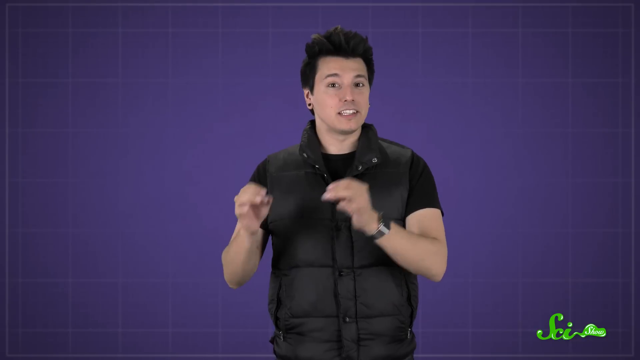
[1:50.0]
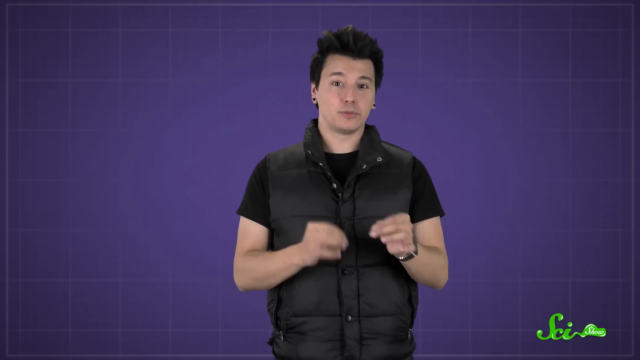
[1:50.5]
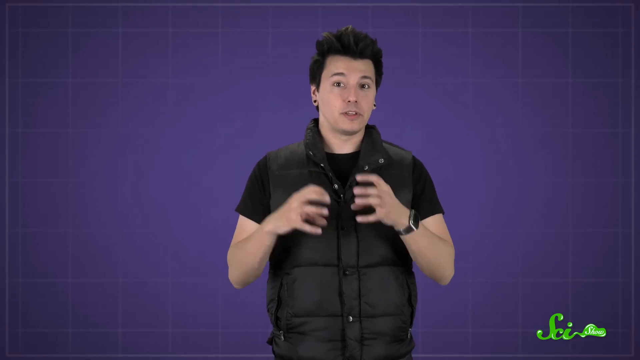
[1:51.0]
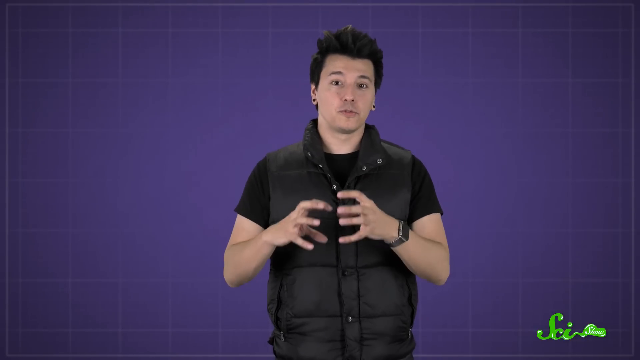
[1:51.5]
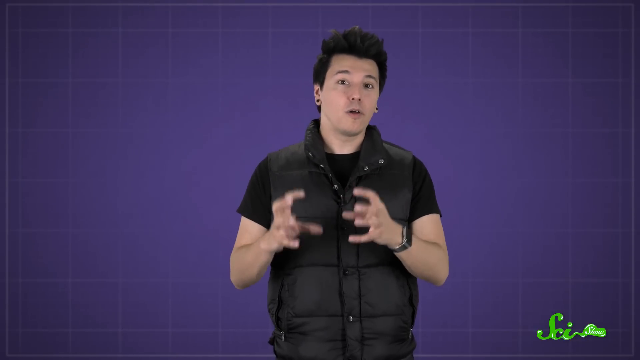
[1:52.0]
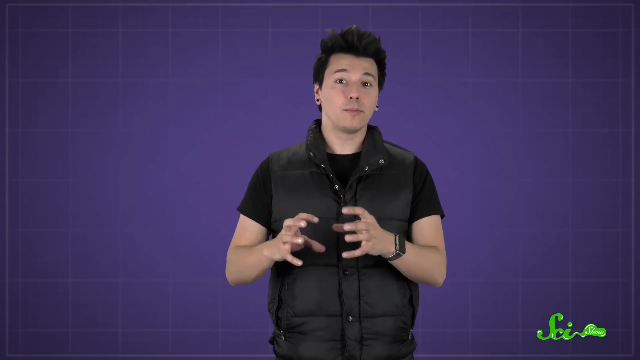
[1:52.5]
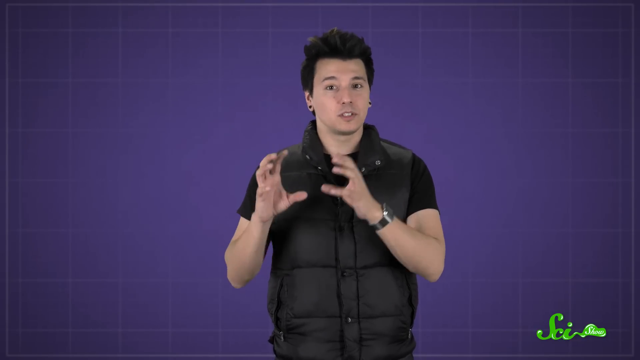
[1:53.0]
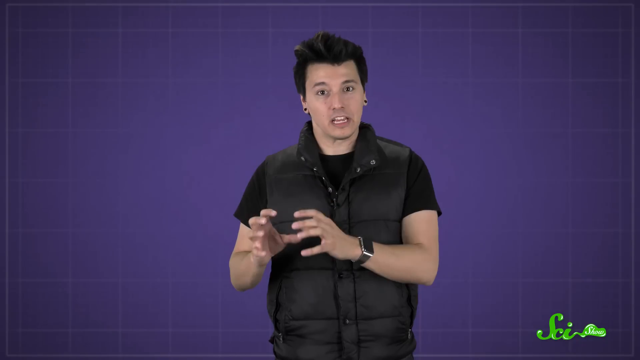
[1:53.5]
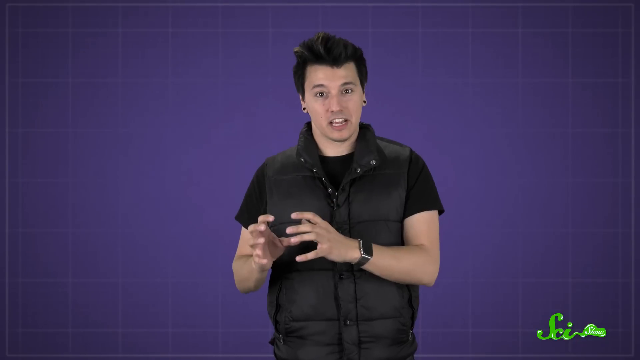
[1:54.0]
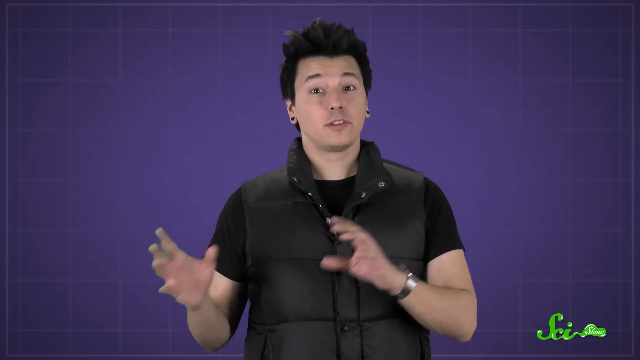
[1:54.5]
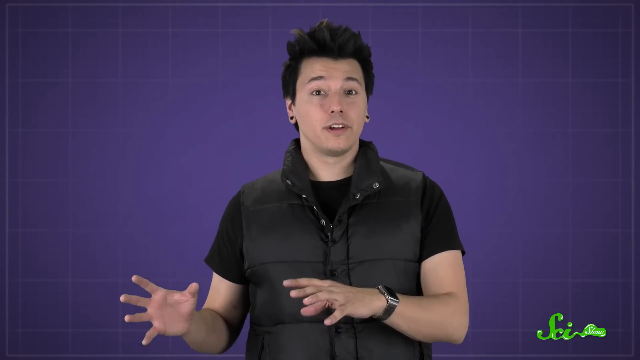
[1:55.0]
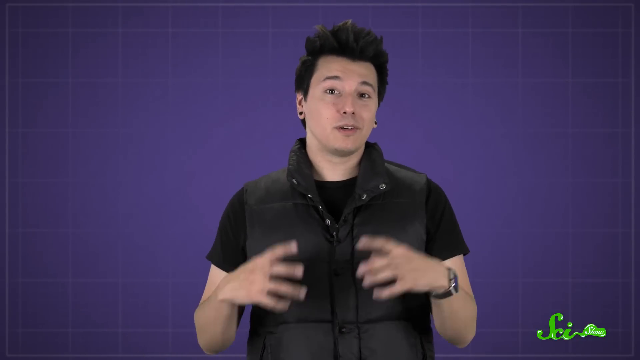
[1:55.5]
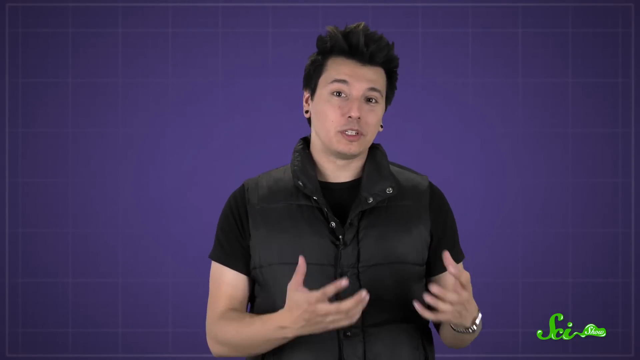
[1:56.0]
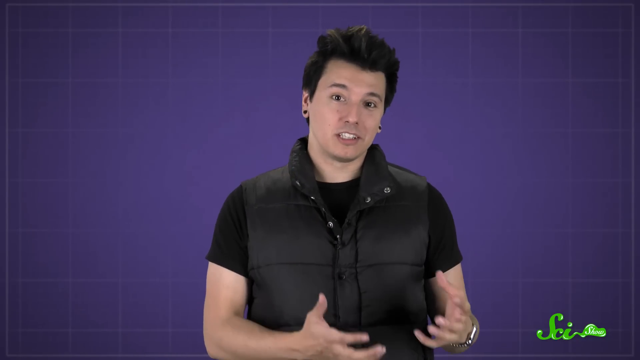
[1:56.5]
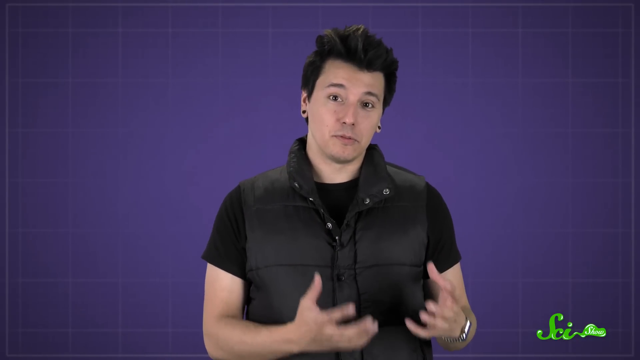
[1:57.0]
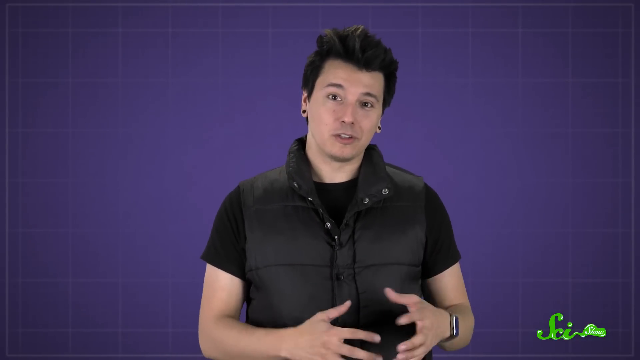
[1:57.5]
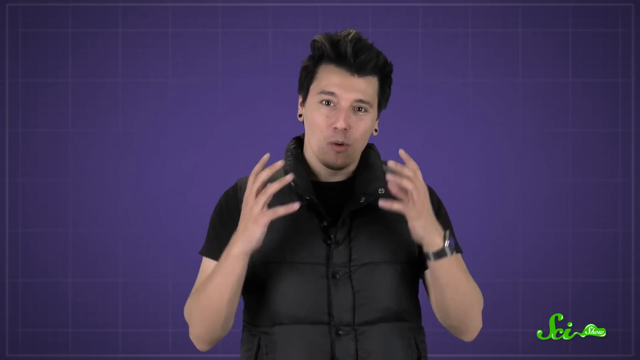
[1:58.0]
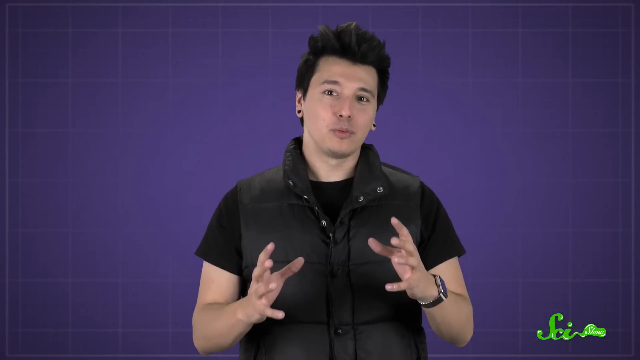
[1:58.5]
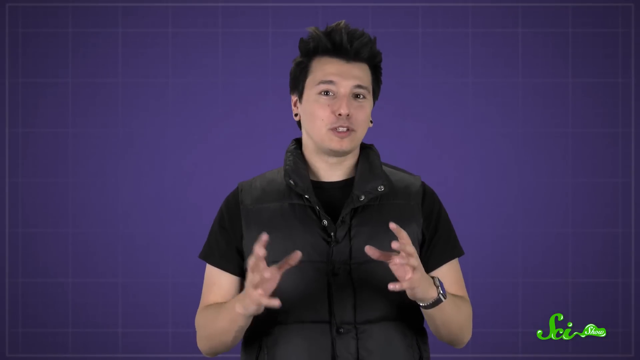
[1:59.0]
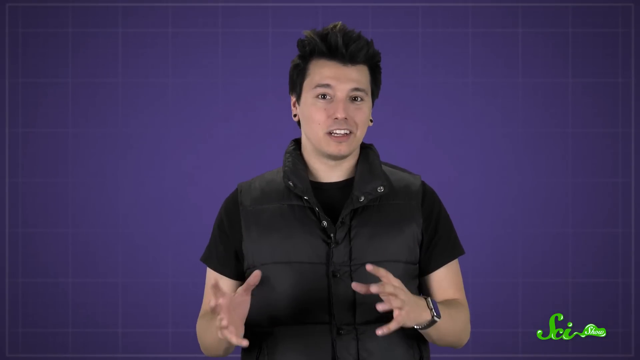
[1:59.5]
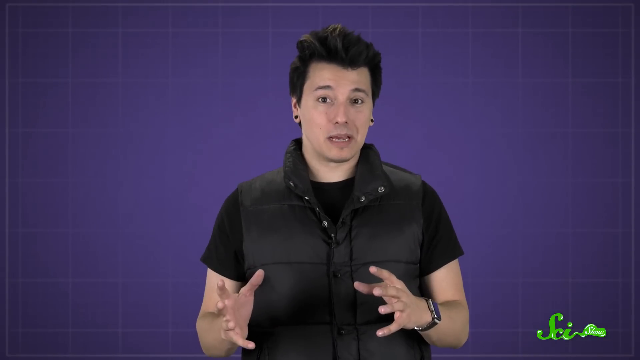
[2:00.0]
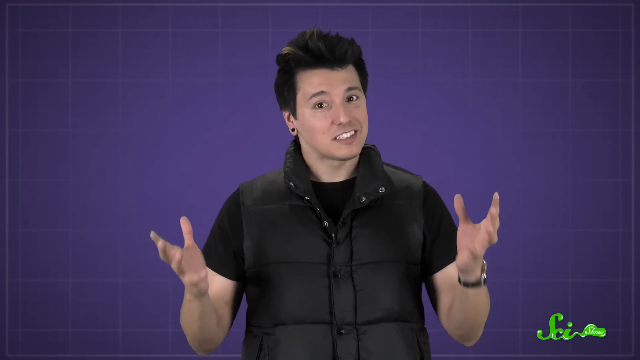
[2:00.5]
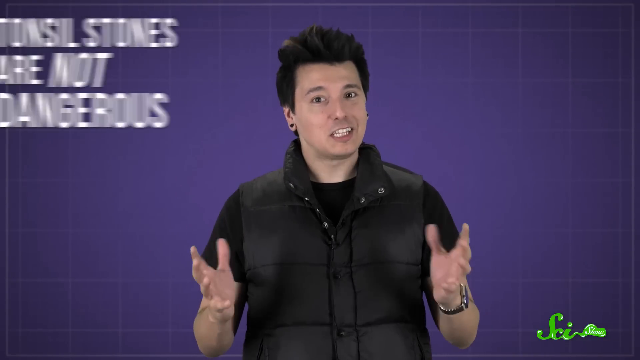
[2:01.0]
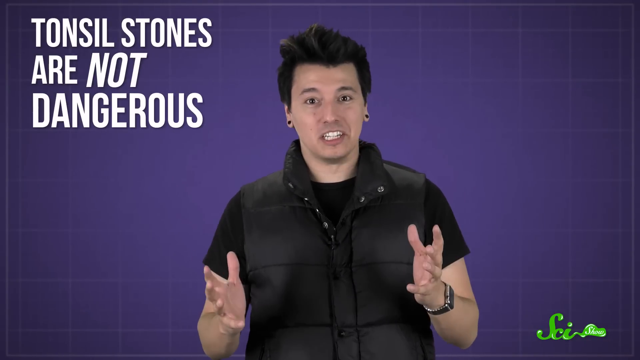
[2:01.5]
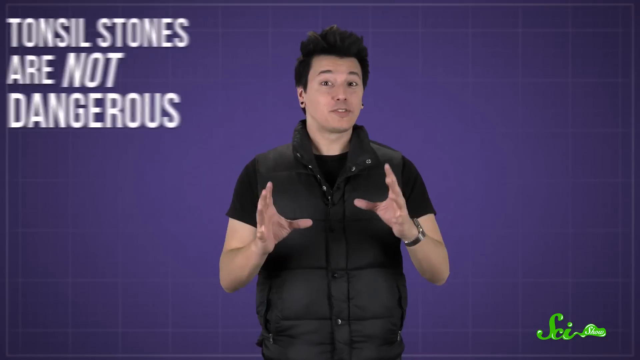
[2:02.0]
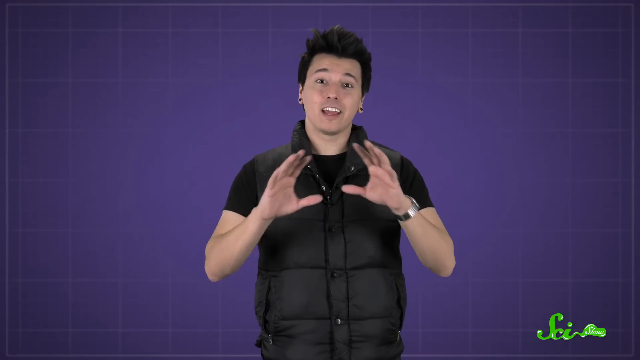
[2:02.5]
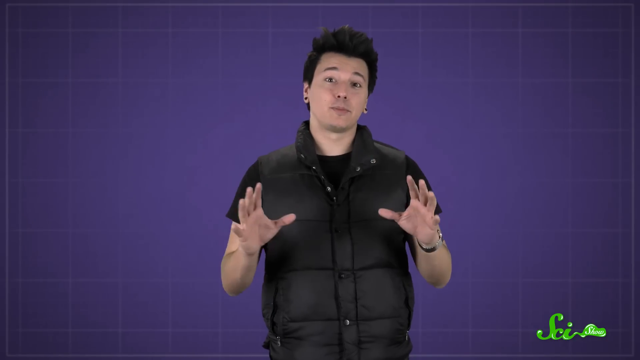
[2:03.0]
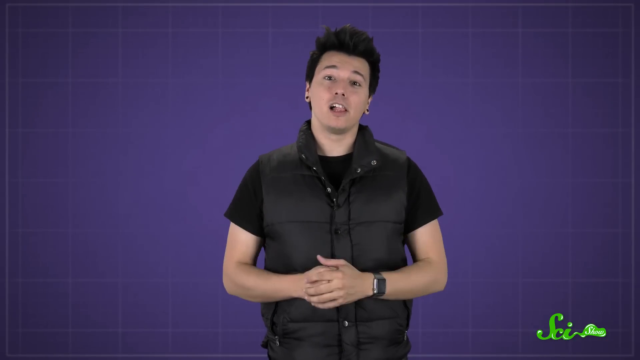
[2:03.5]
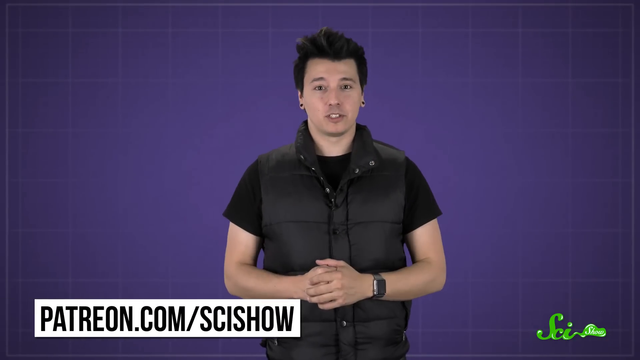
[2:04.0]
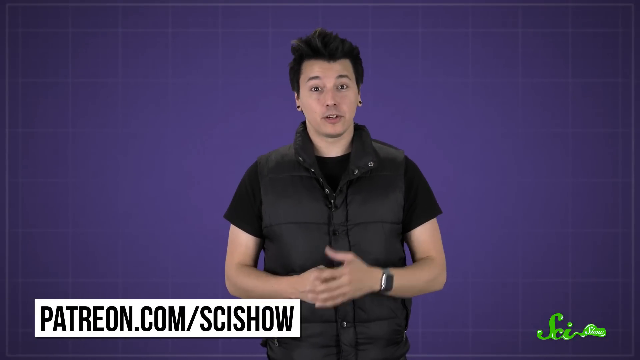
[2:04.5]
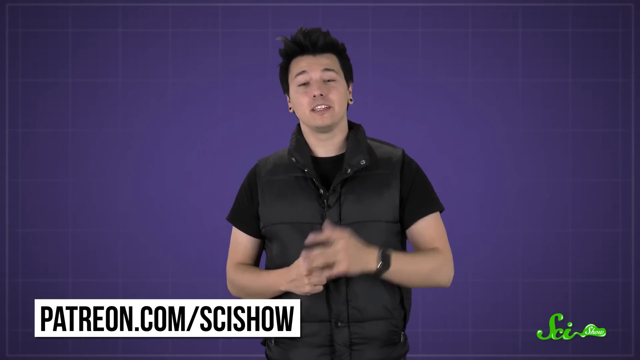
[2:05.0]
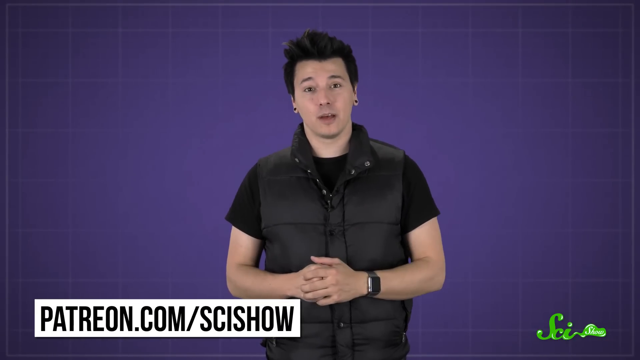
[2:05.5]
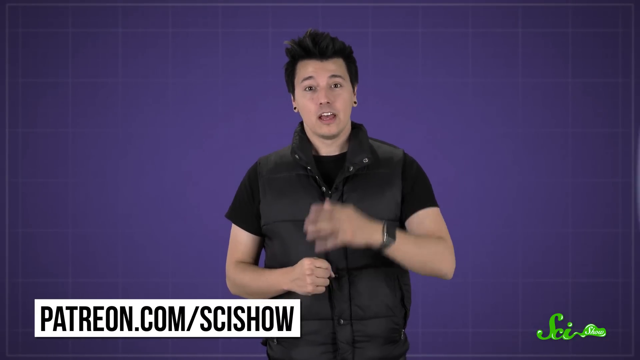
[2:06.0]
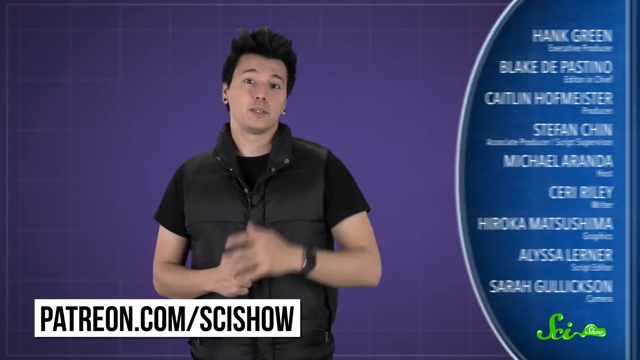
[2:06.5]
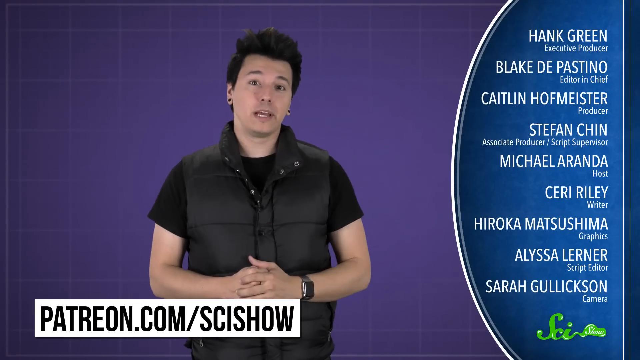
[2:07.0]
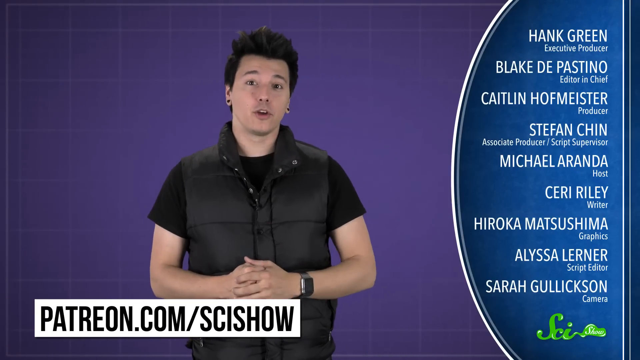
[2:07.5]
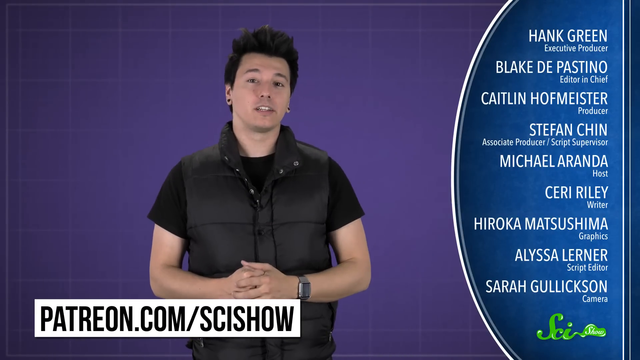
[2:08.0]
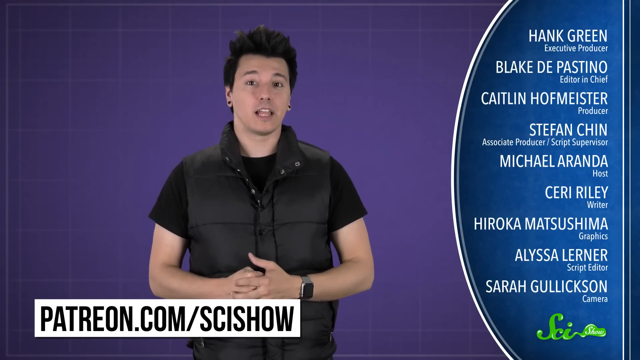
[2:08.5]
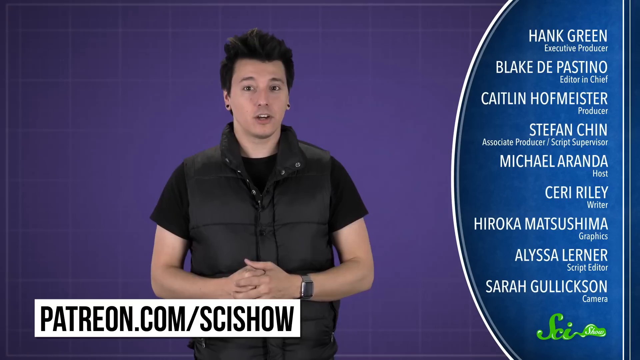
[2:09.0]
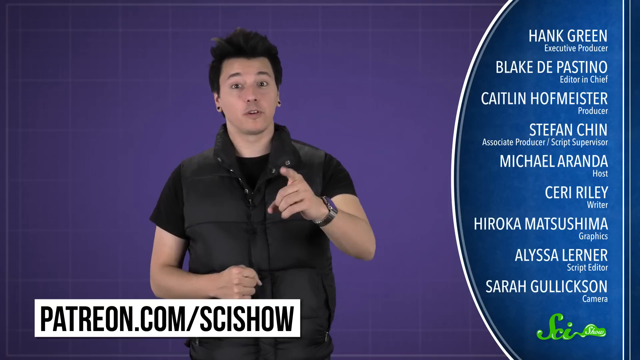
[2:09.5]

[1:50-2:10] A Caucasian man with long hair and black earrings uses his hands and many gestures as he speaks.